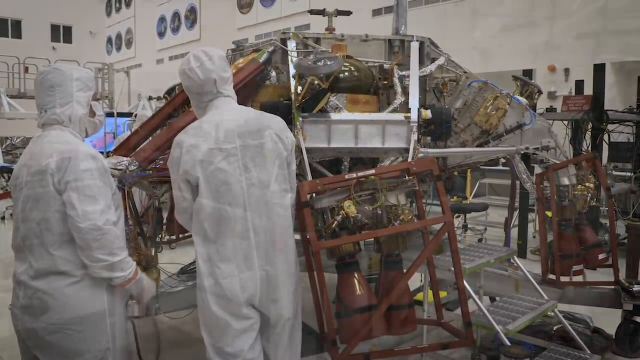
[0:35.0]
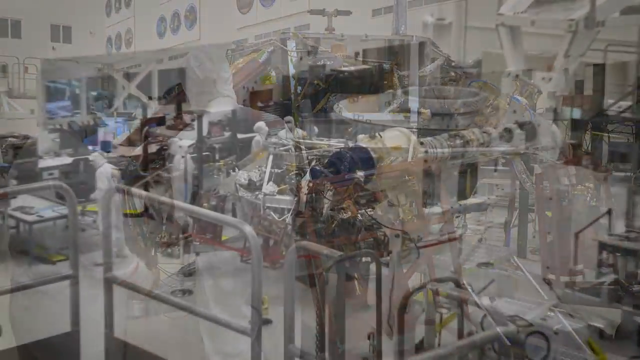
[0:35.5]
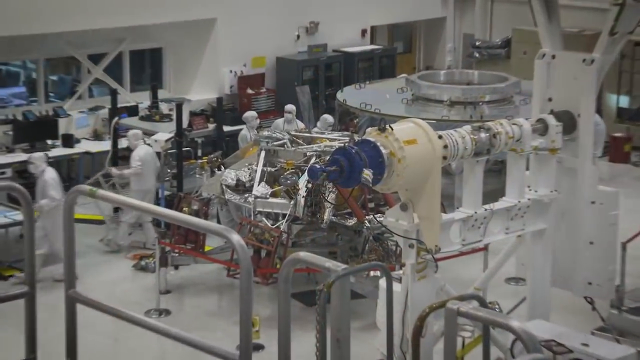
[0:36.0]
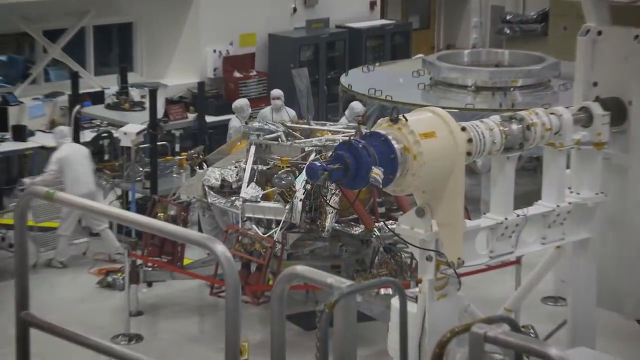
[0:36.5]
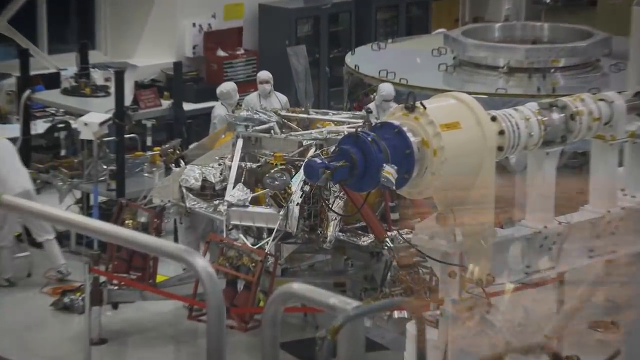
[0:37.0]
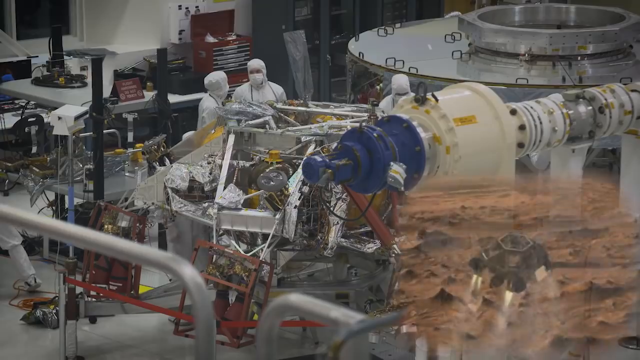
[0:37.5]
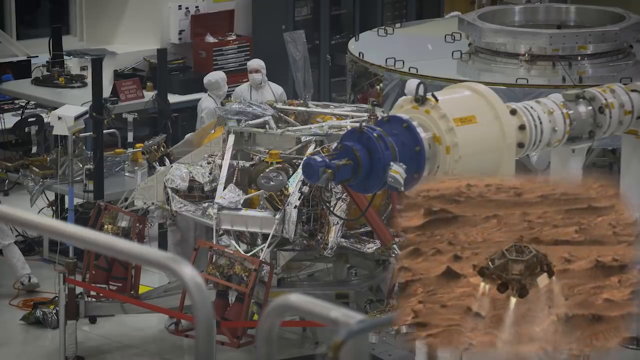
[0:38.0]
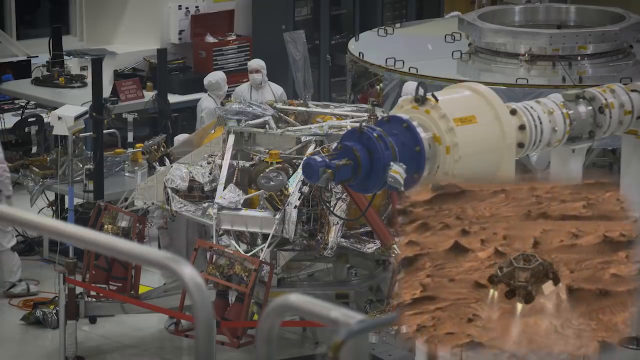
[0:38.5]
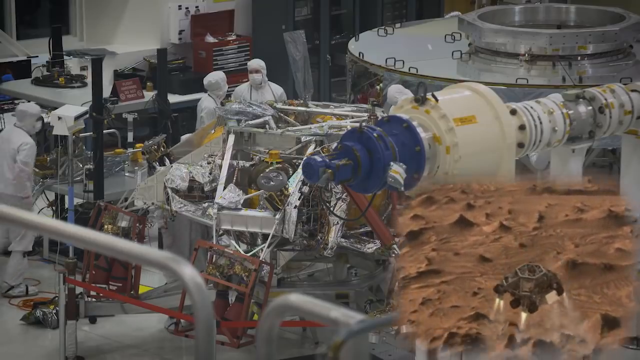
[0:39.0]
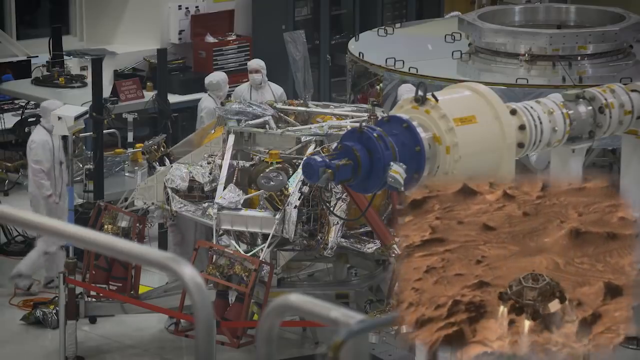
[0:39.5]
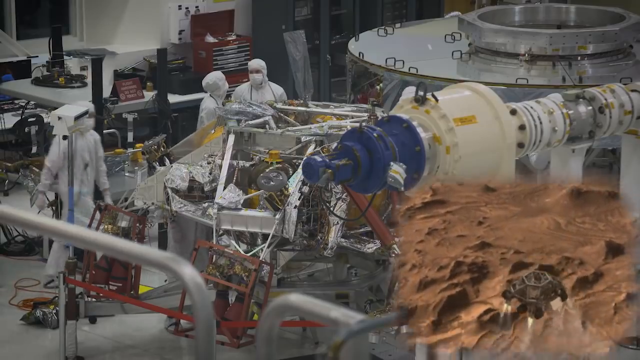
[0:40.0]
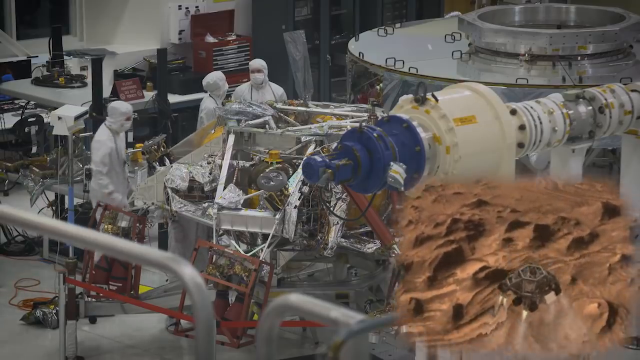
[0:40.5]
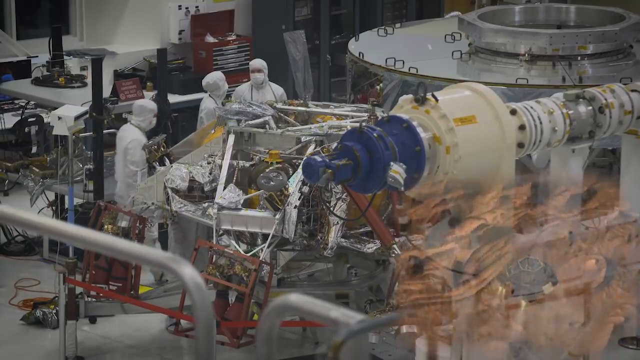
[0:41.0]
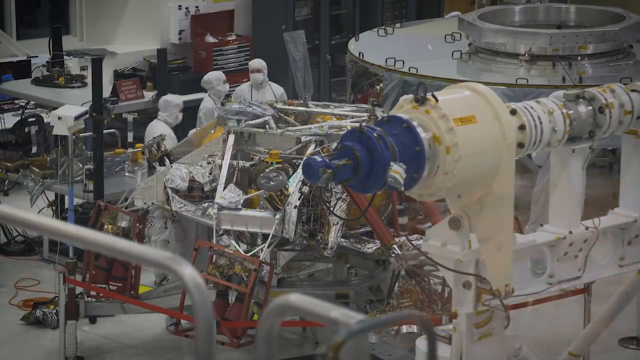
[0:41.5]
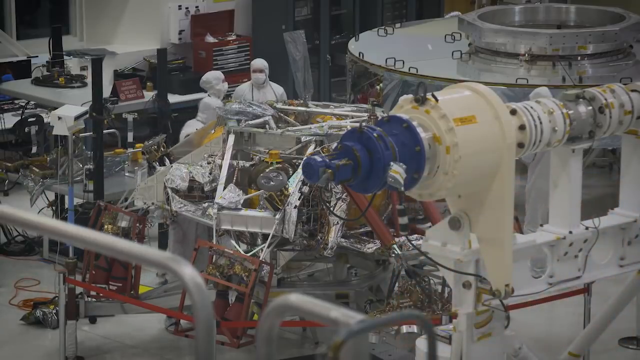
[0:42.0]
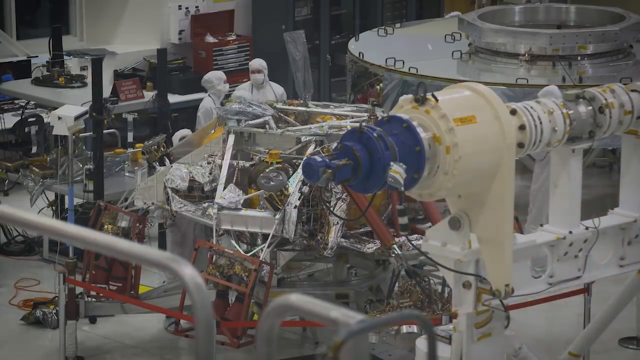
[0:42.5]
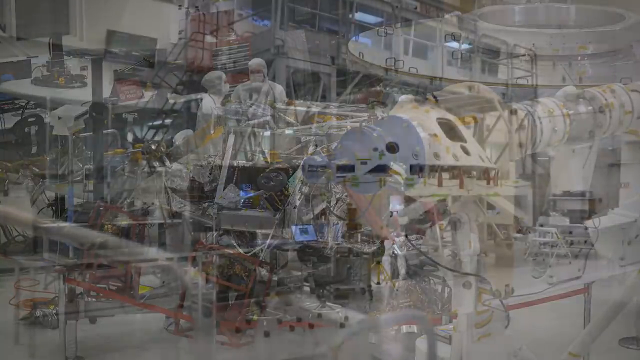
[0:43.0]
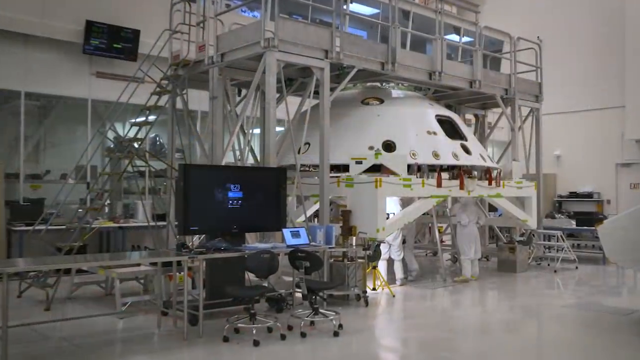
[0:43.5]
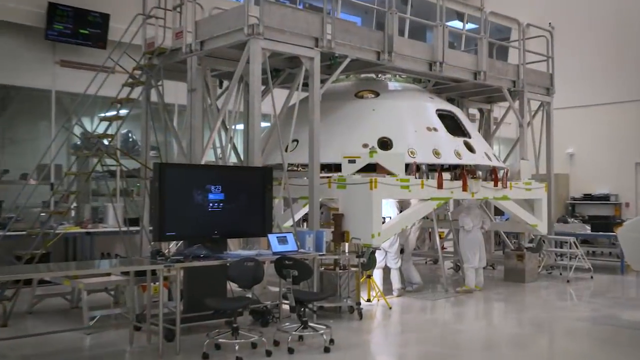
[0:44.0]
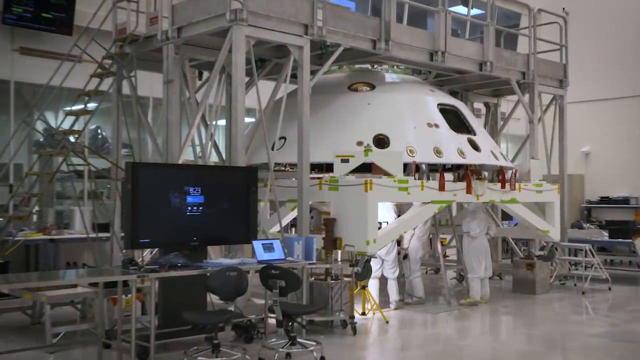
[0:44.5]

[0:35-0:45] There are no captions as the scientists and builders stand around different components of the ship that will be launched toward Mars. At one point a picture-in-picture appears in the lower right corner of the screen: a movie-like graphic illustration of the capsule being built landing on Mars, with flames shooting out from all four corners of the vehicle to slow it down as it prepares to land on the surface. Everyone in the facility wears white clean suits covering them from head to toe. Several different vehicles are being worked on; one is the vehicle itself, and another image appears to show the protective shell that will cover it.